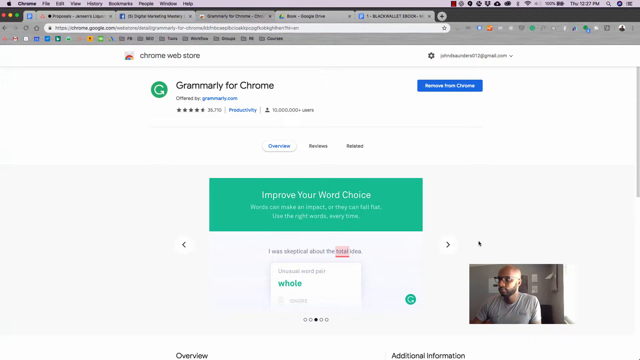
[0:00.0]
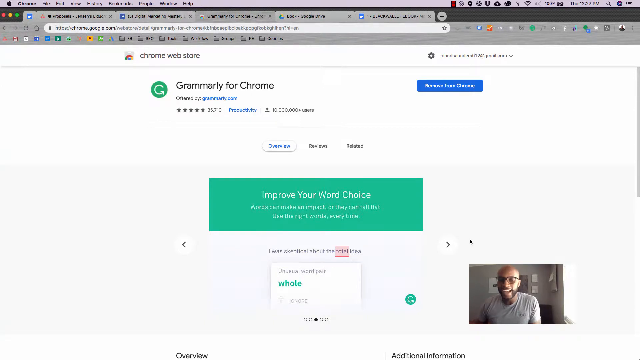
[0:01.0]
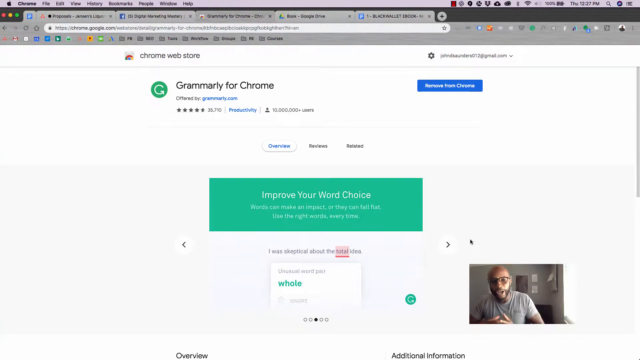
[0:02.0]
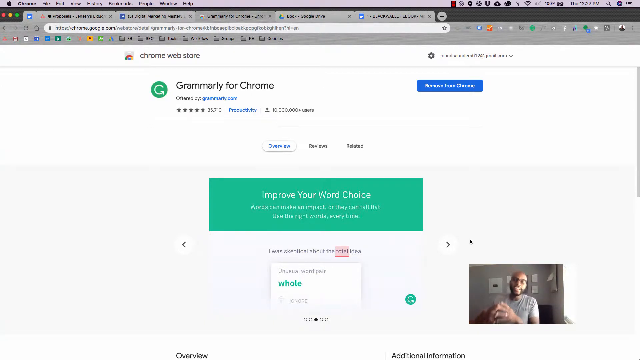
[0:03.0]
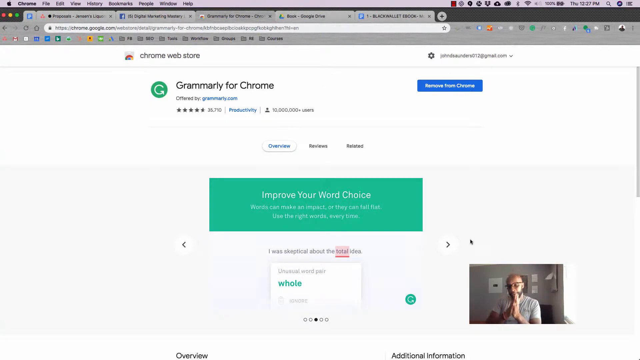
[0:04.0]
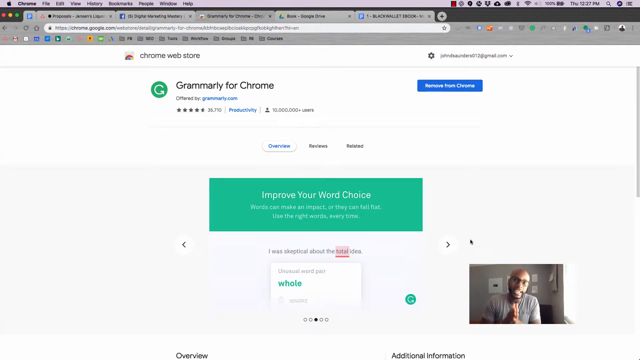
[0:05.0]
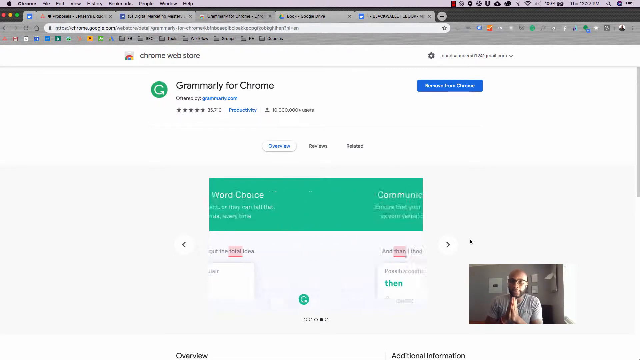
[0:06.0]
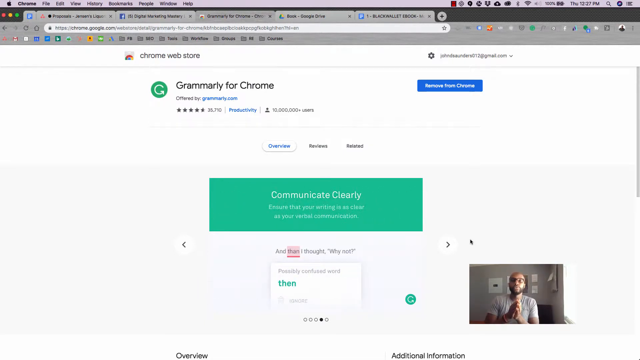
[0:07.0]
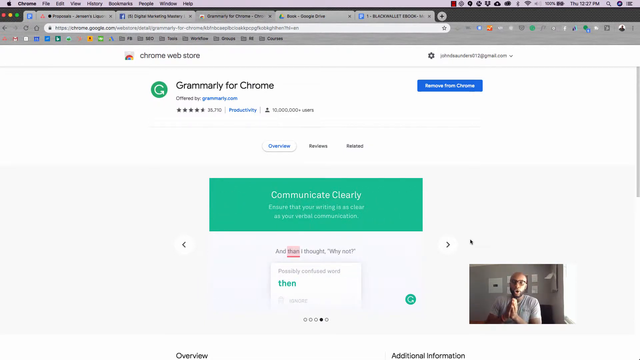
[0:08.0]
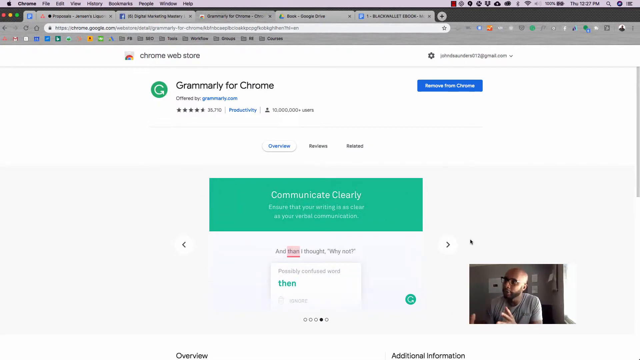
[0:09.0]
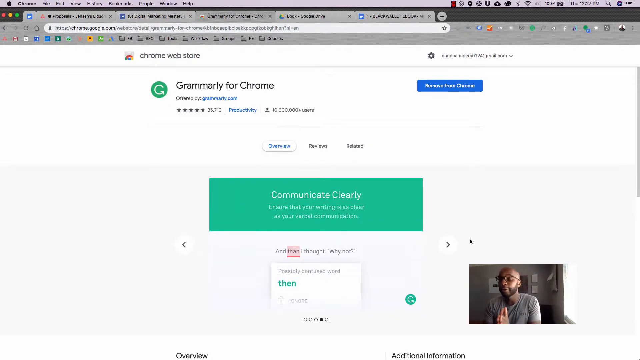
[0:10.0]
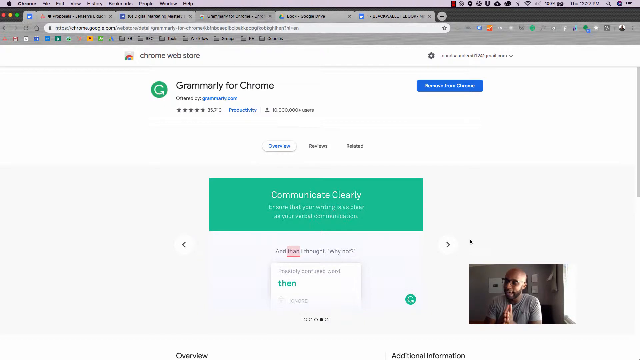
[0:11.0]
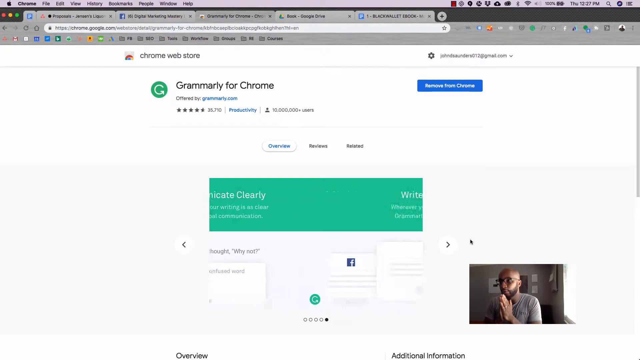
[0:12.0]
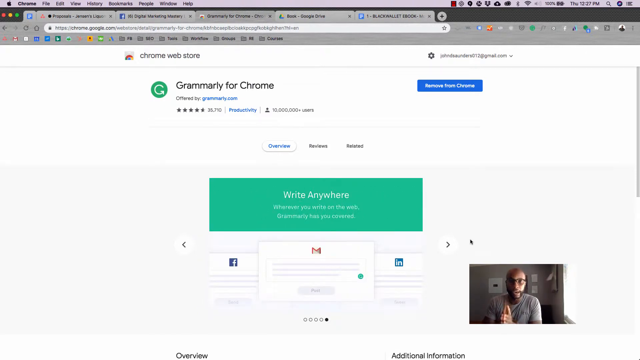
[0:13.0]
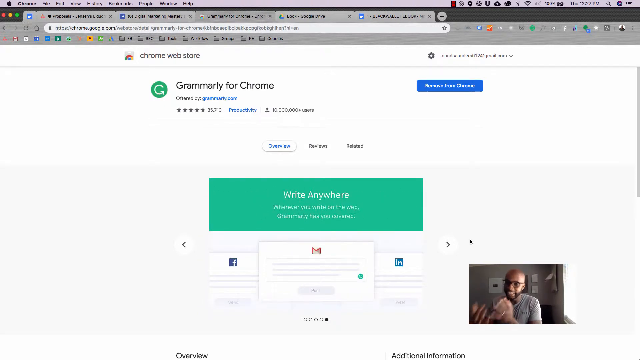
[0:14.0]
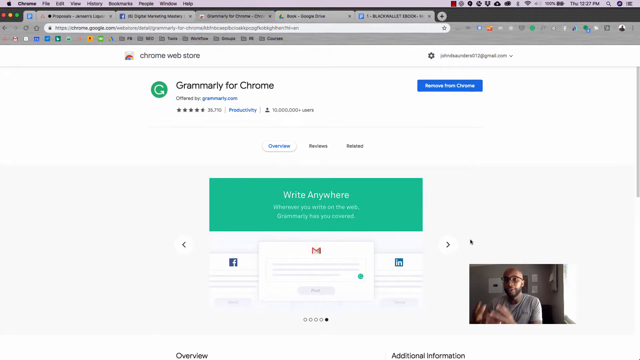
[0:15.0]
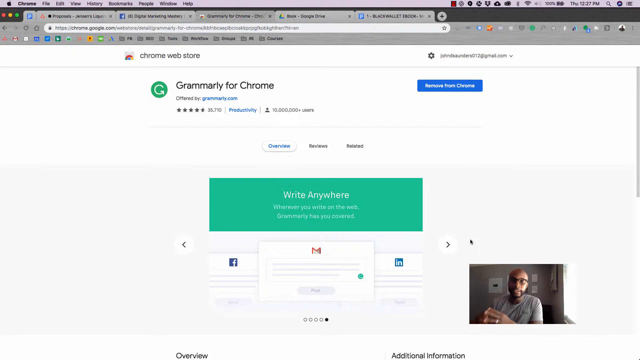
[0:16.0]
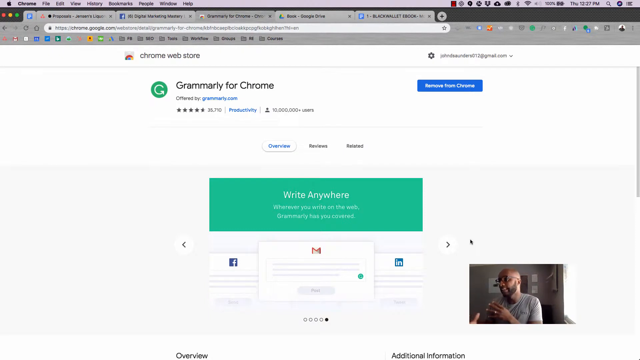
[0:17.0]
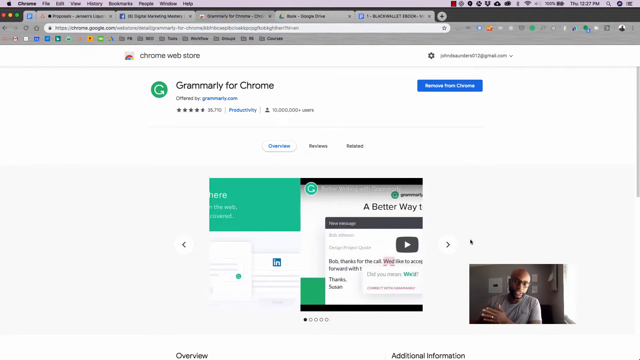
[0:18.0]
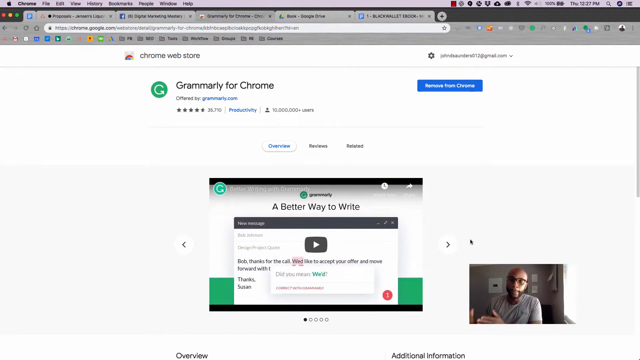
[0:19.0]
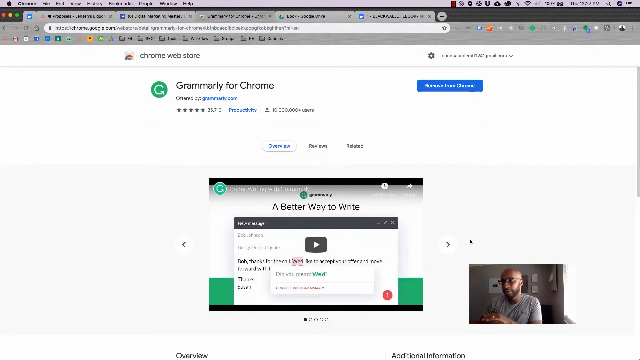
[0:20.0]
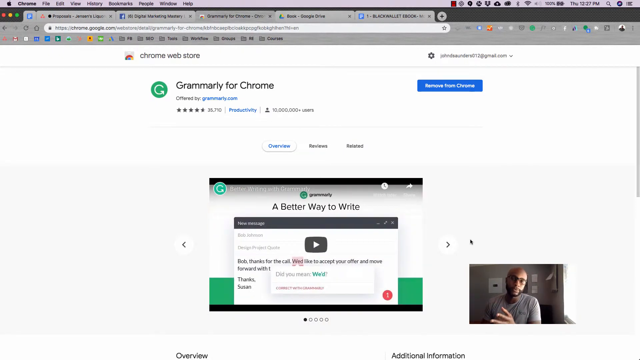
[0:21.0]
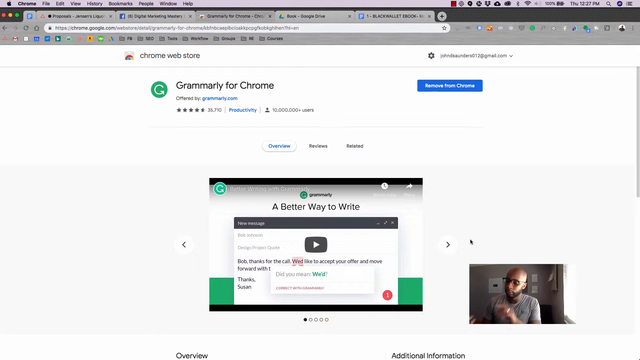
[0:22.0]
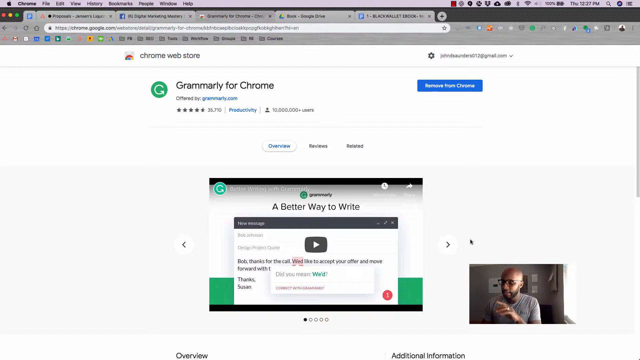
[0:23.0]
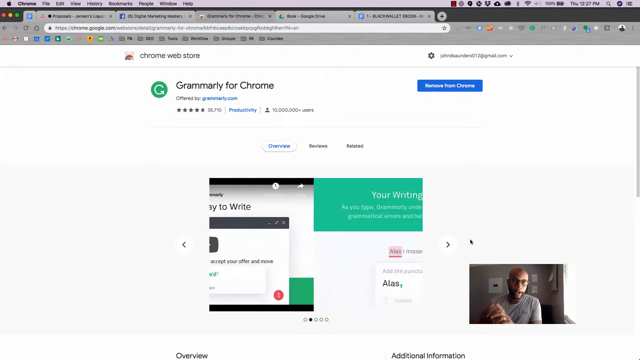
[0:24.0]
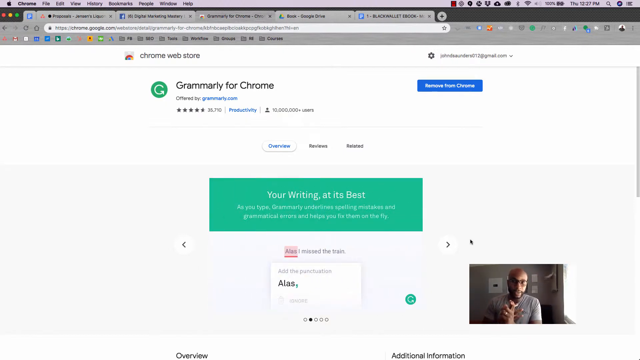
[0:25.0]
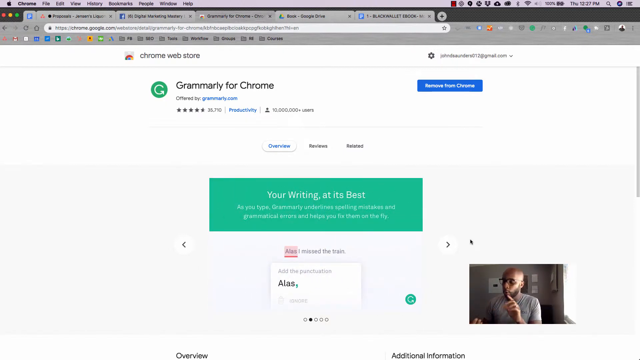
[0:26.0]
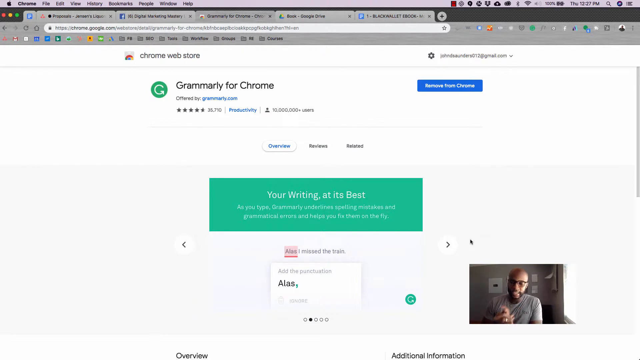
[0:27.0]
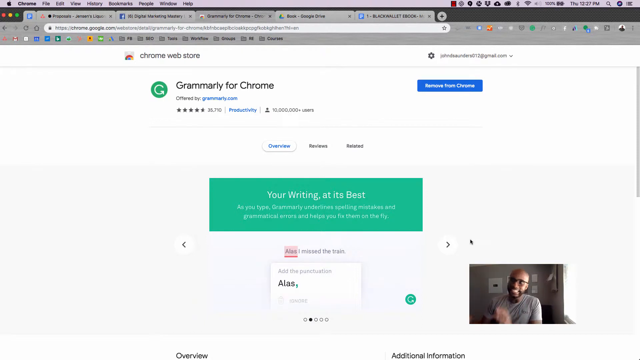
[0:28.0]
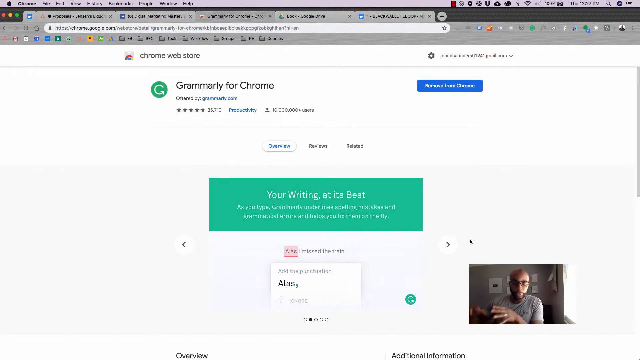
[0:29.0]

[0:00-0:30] A man presents a tutorial while sharing his screen, with a small video of himself in the bottom right corner. On screen, a browser, apparently Chrome, is open to the Chrome Web Store page for the Grammarly for Chrome extension. At least five tabs are open, and he is on a Mac. The extension page states that it improves word choice, gives options for reading better, helps users communicate clearly by changing how they write, and can be used in applications such as Facebook, Gmail and LinkedIn.